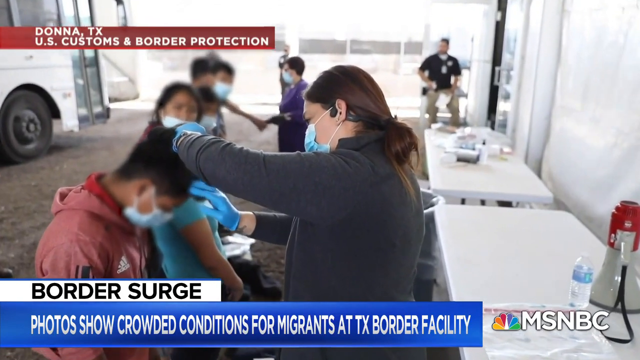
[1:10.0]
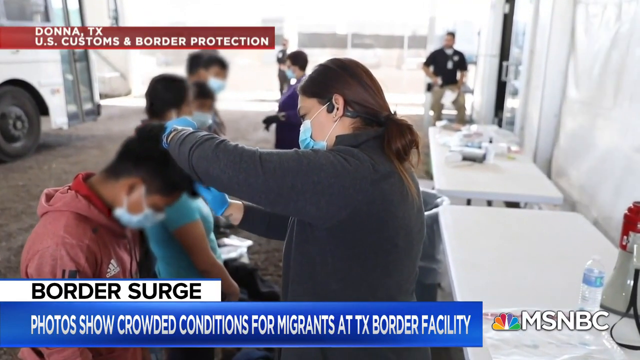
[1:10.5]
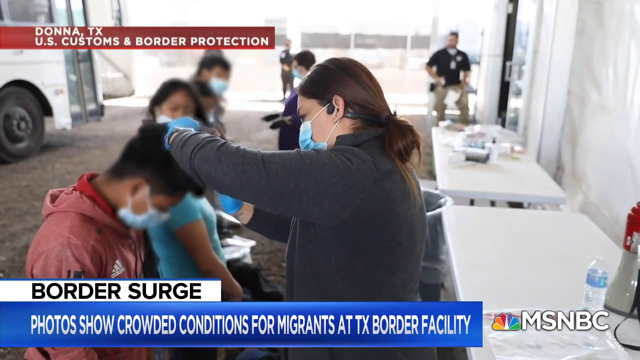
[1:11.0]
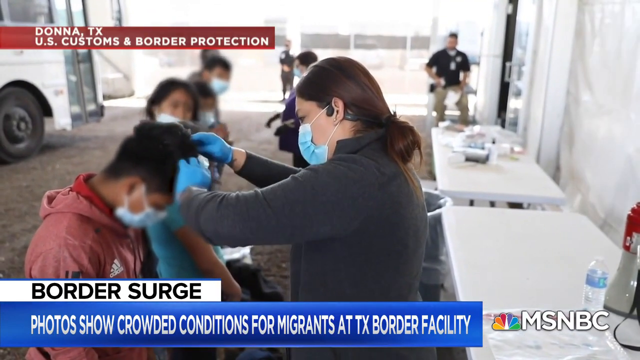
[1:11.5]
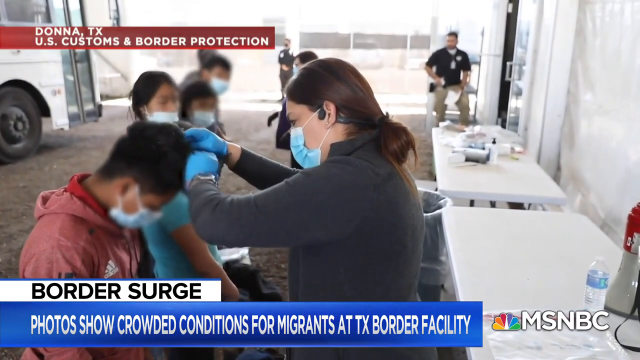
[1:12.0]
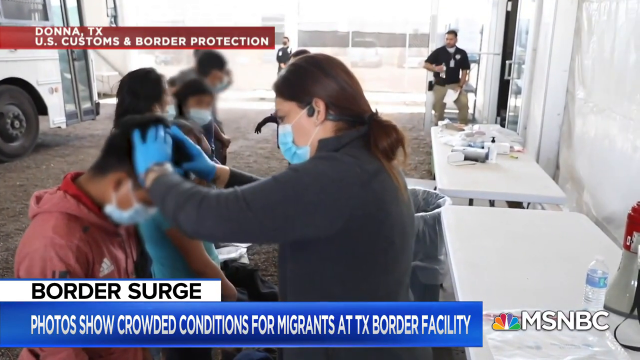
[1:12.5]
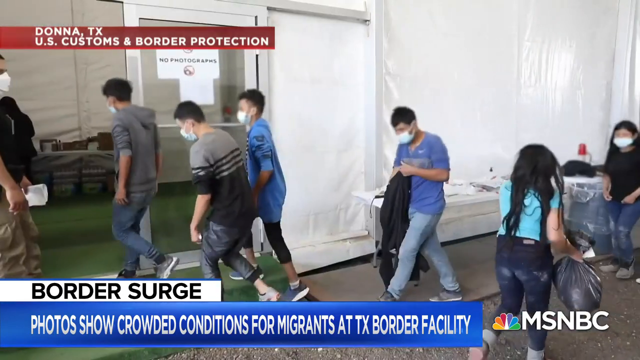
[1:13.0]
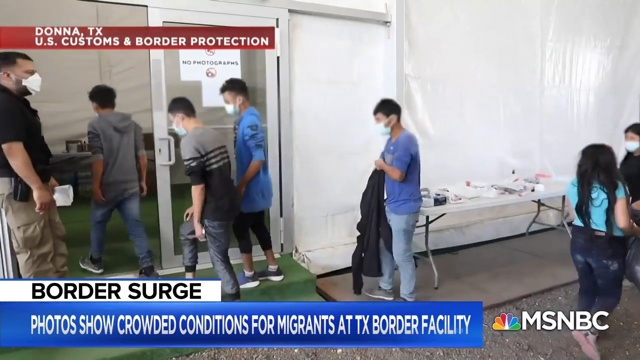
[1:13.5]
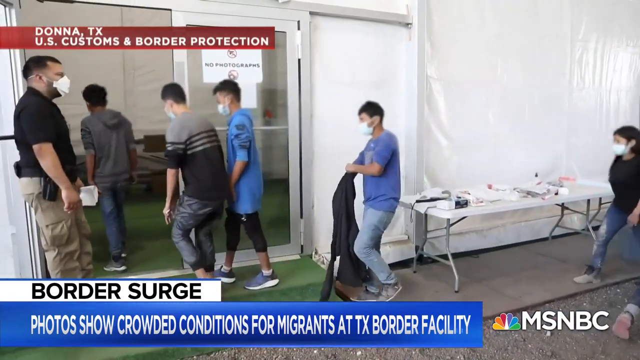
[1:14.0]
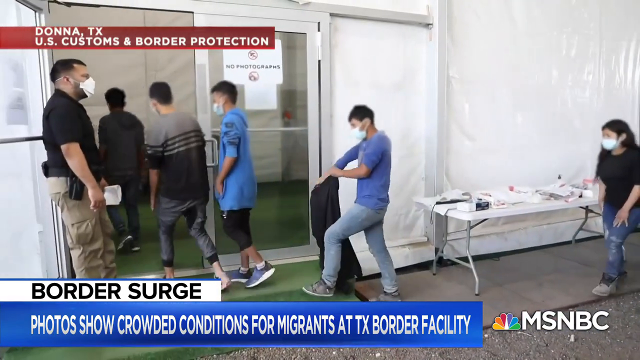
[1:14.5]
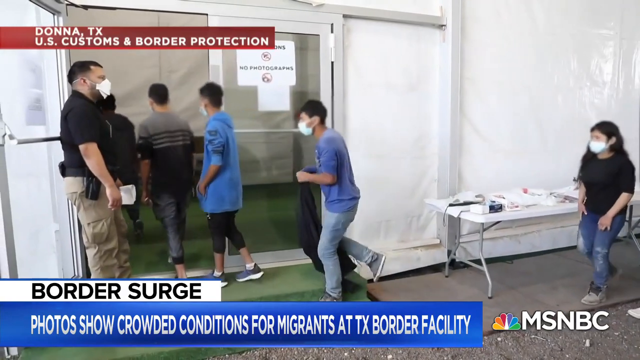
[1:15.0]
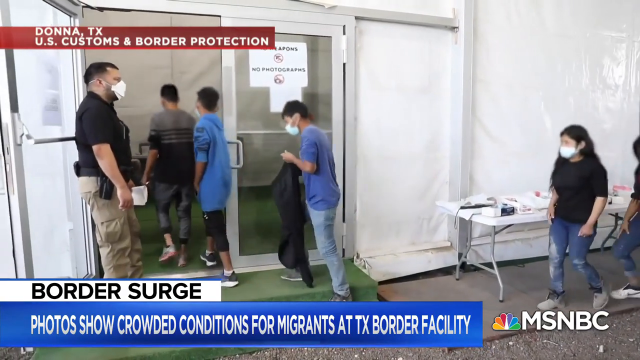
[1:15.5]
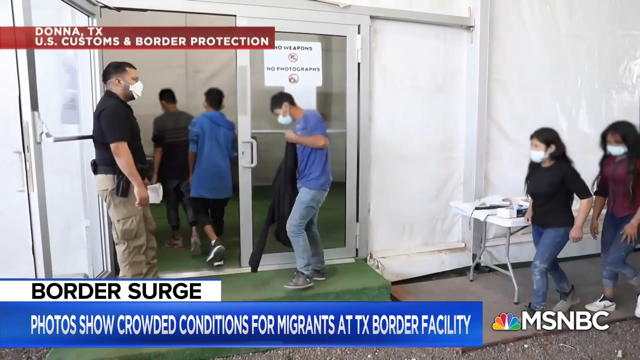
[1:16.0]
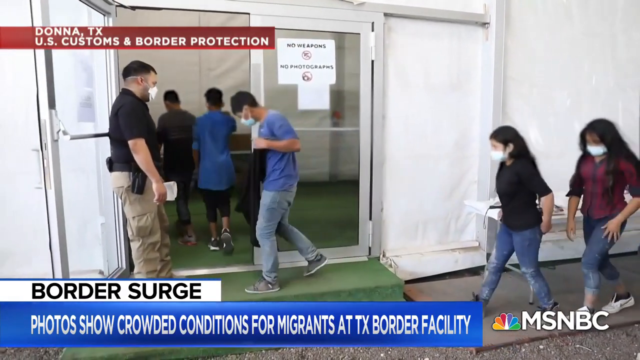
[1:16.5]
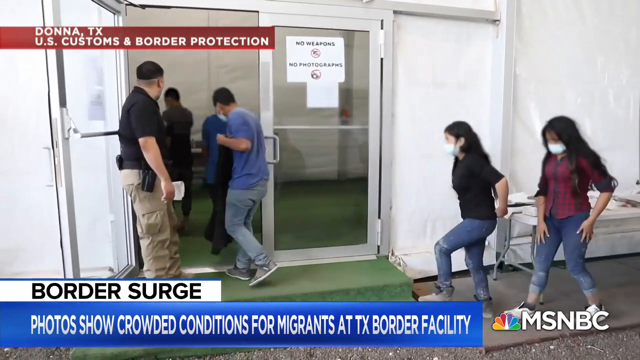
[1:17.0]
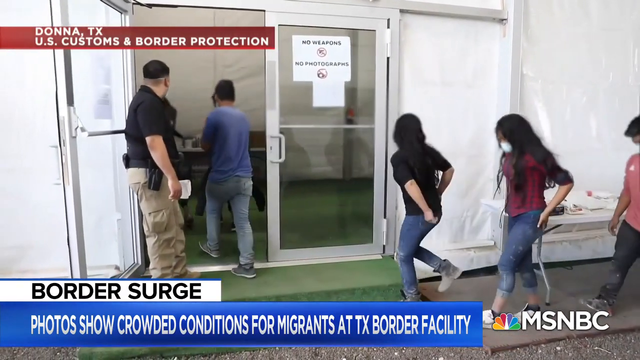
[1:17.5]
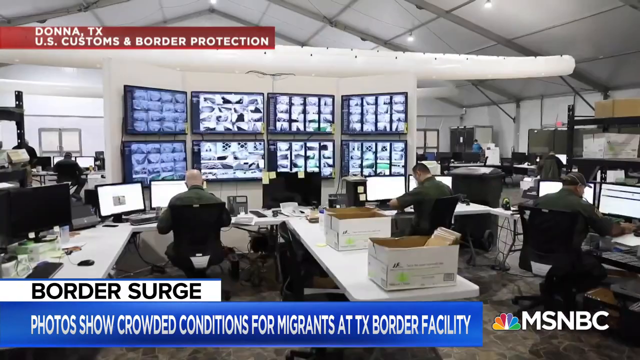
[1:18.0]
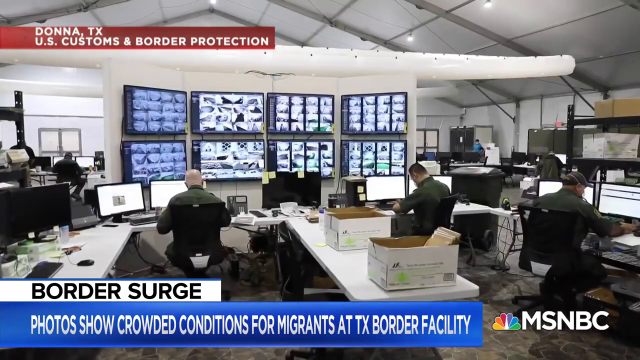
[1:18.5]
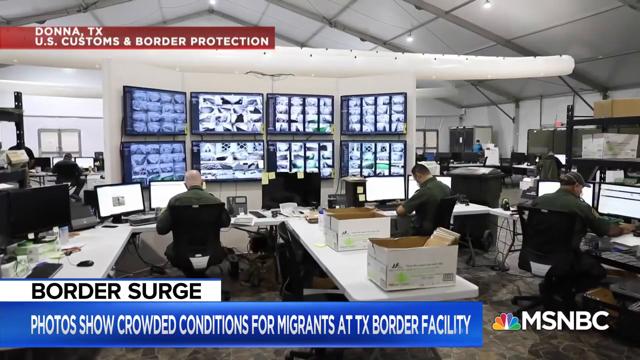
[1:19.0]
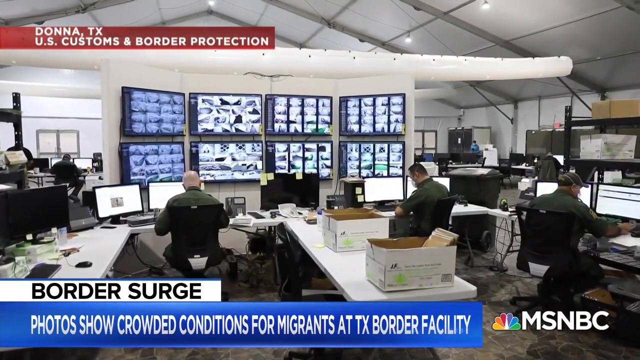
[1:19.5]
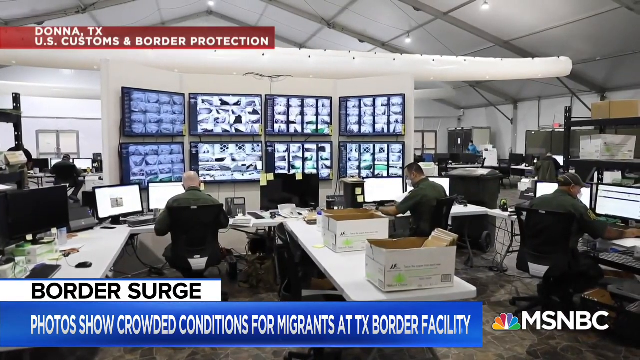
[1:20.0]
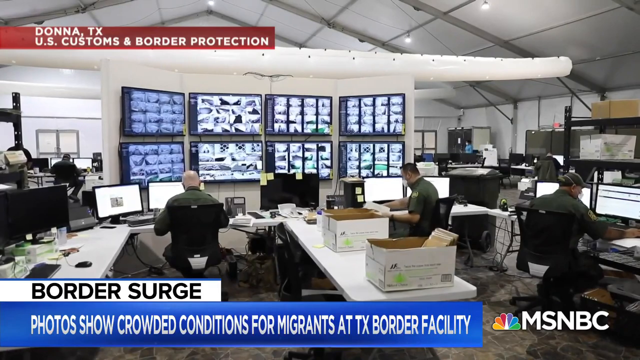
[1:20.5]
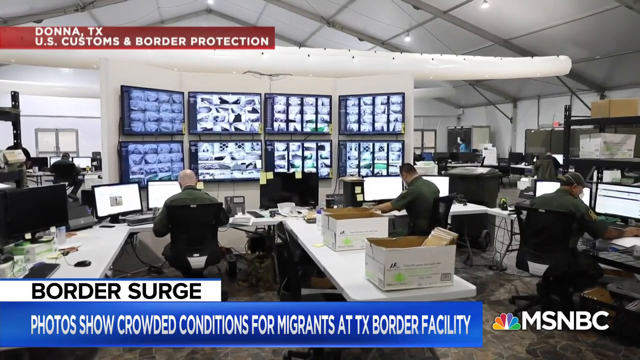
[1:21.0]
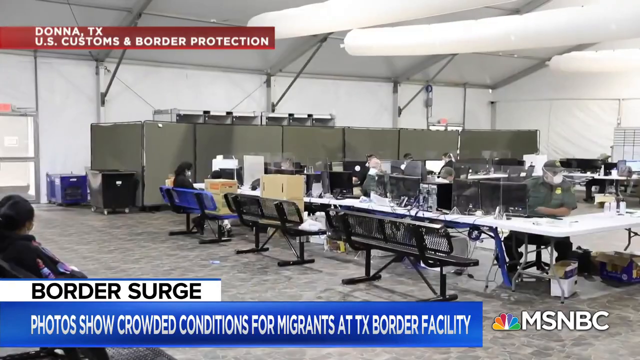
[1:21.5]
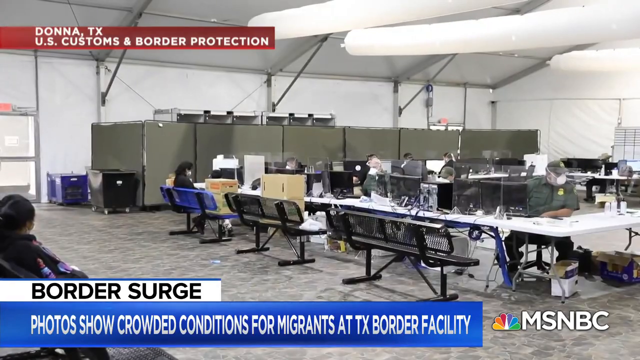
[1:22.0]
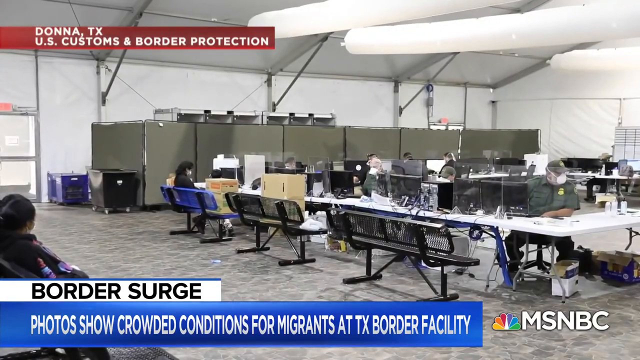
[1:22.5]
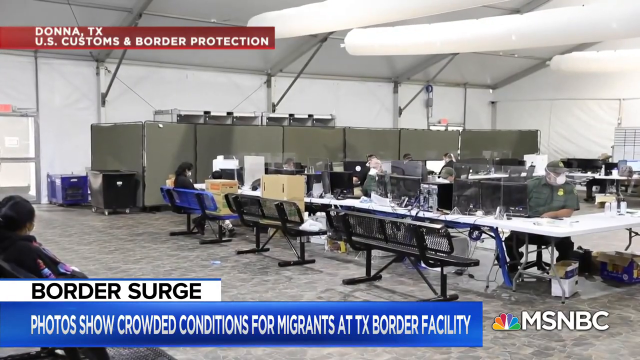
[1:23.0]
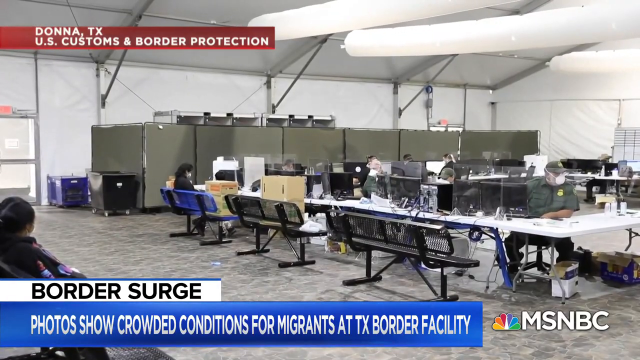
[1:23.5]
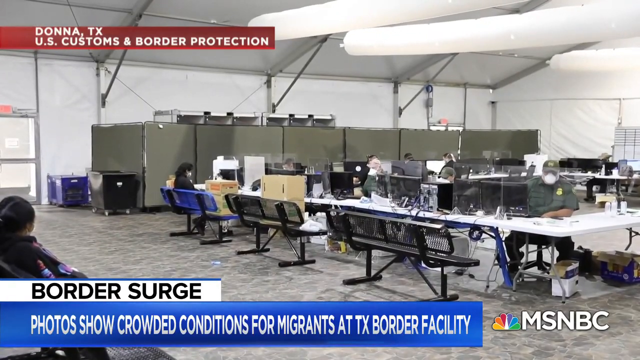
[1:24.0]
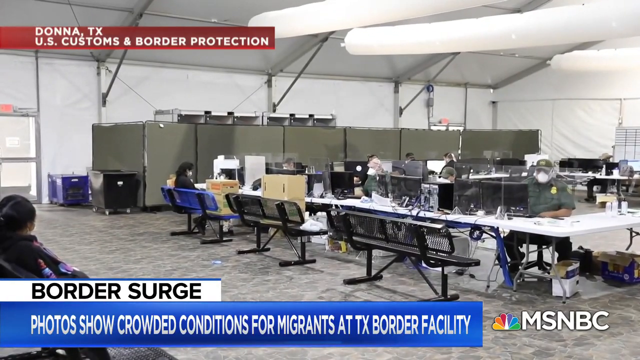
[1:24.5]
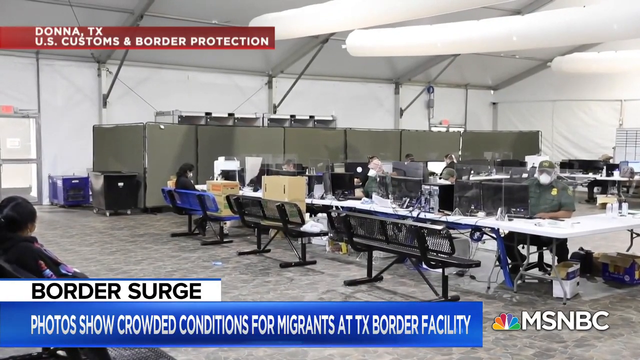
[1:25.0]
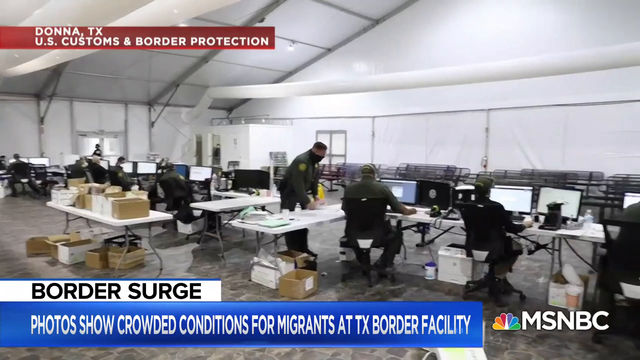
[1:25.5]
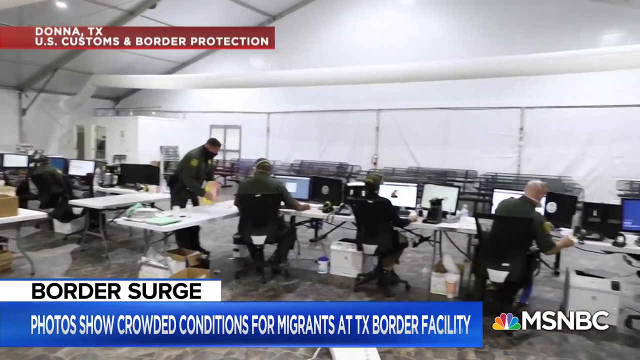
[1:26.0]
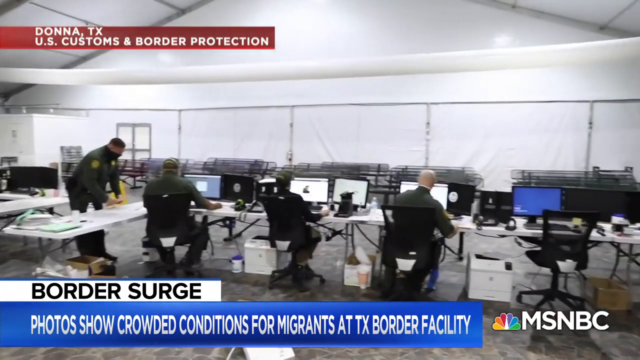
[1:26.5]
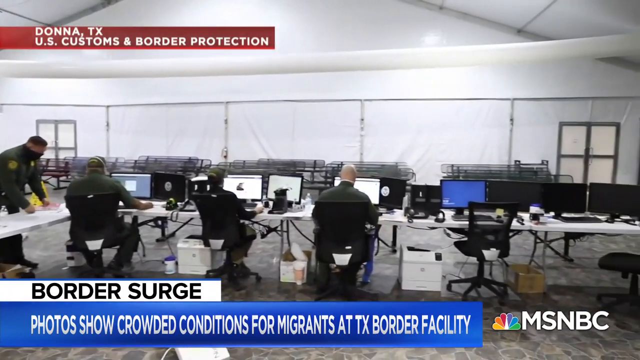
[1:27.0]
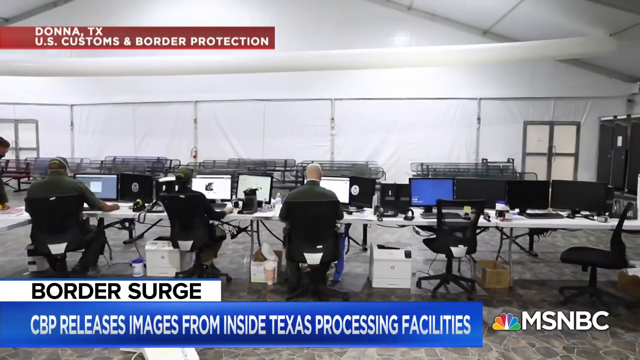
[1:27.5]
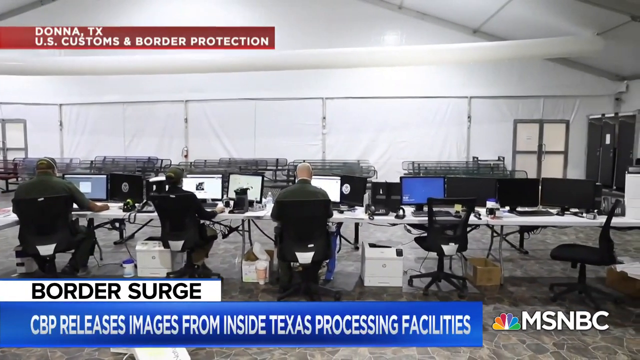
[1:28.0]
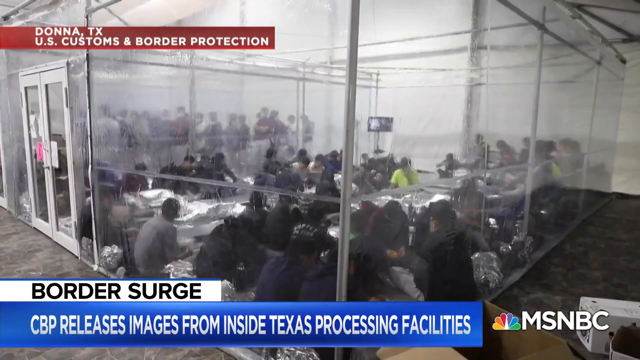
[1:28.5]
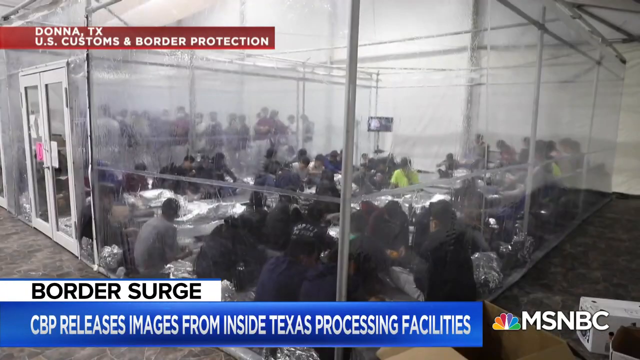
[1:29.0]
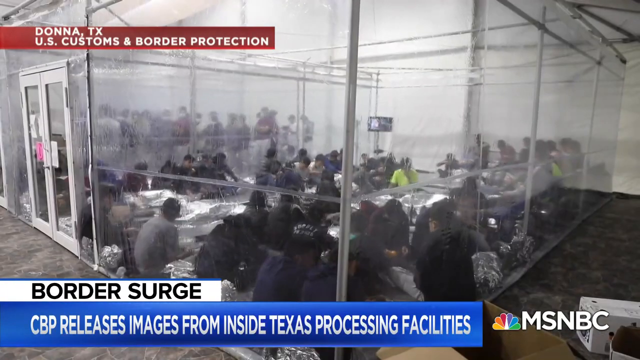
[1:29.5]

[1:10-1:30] The woman, apparently some kind of nurse, continues checking the people's hair. She wears a dark gray or black sweatshirt and a blue COVID mask, and her brown hair is in a ponytail. Several individuals, both men and women, then go through a door while a man stands by it, apparently holding it open for them. The video then moves into some kind of control room. On the back wall are eight large televisions in two rows of four, and about three people sit at a desk in front of them, looking at their computers. A different angle of the same room follows, with the camera panning from left to right to show the entire room.